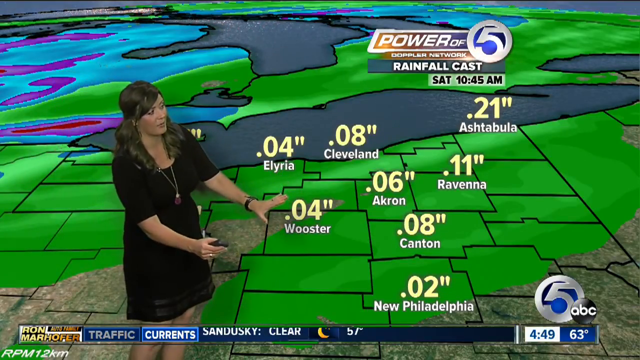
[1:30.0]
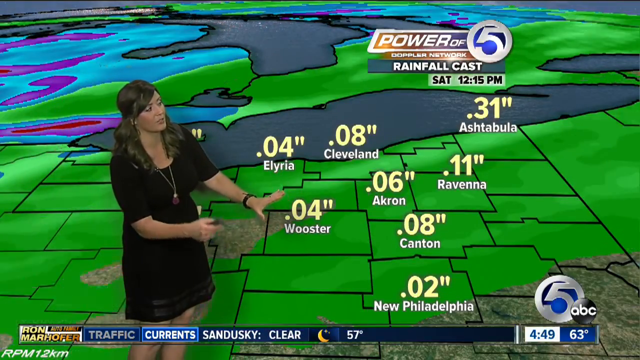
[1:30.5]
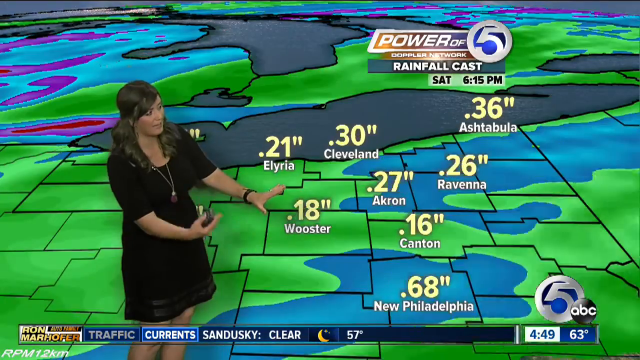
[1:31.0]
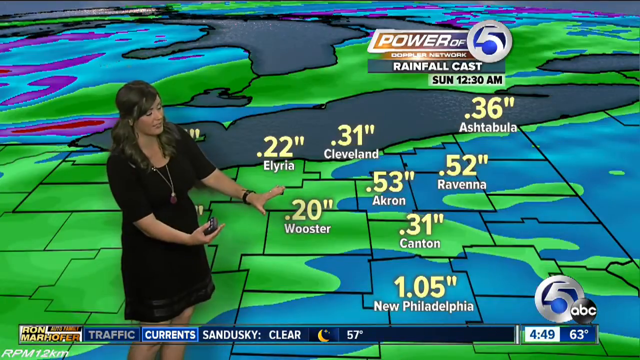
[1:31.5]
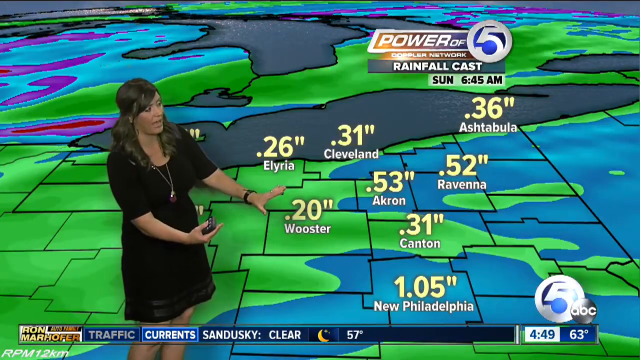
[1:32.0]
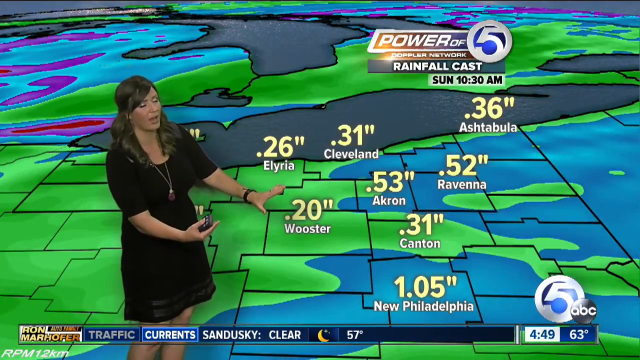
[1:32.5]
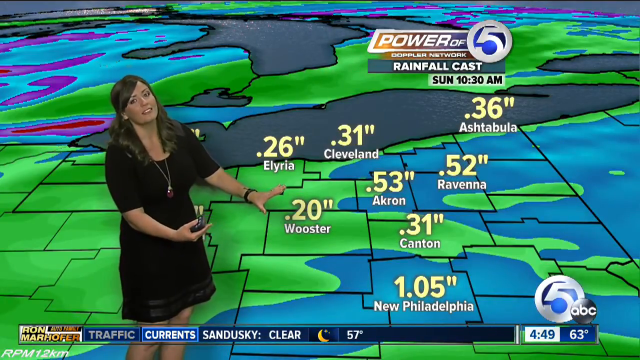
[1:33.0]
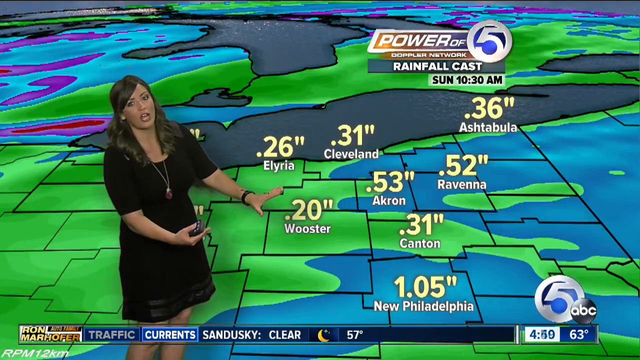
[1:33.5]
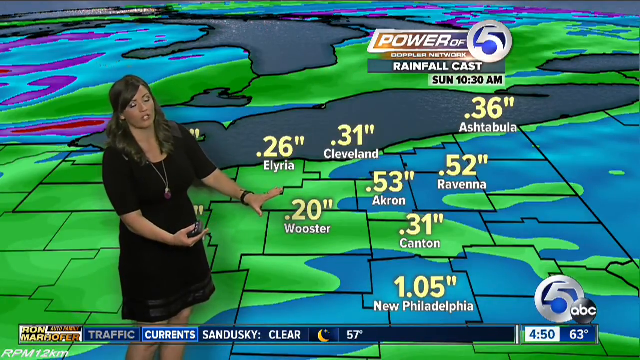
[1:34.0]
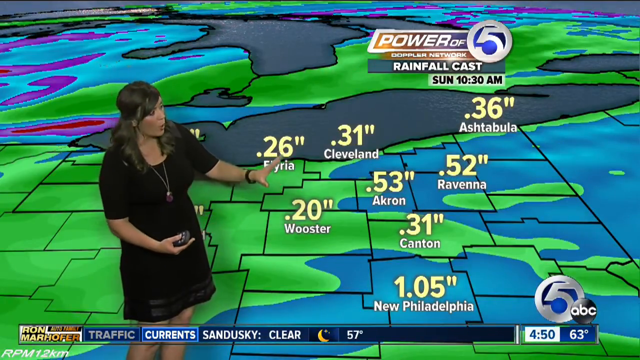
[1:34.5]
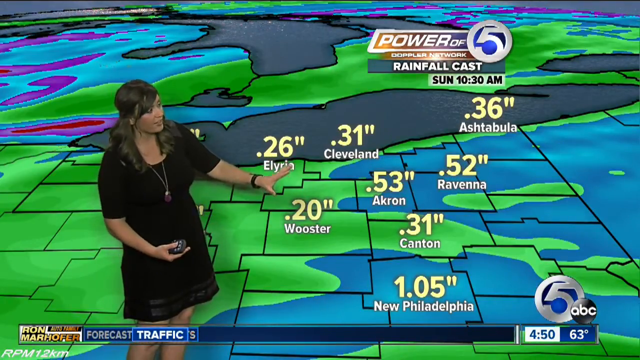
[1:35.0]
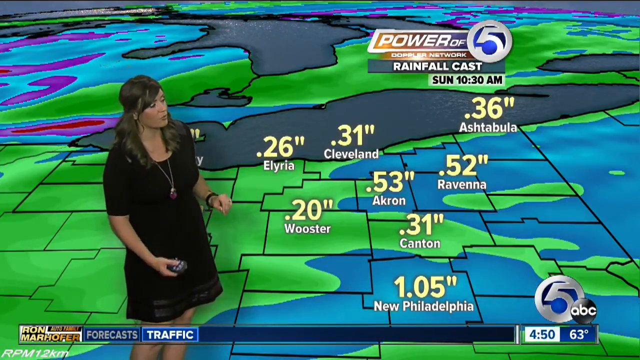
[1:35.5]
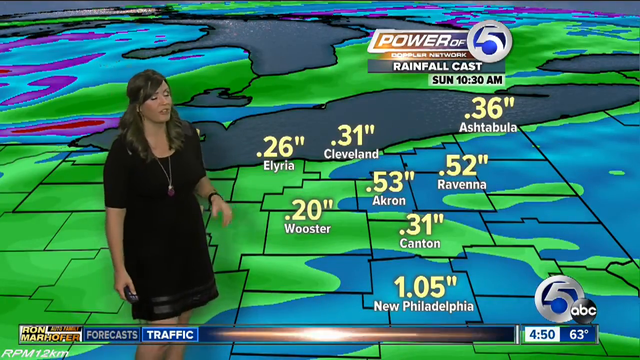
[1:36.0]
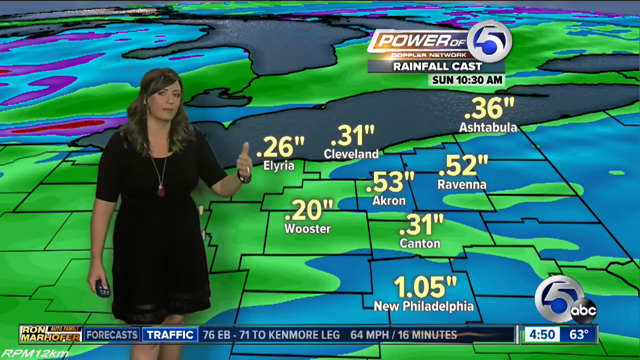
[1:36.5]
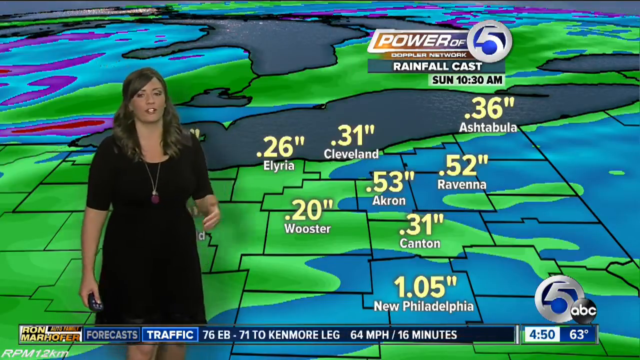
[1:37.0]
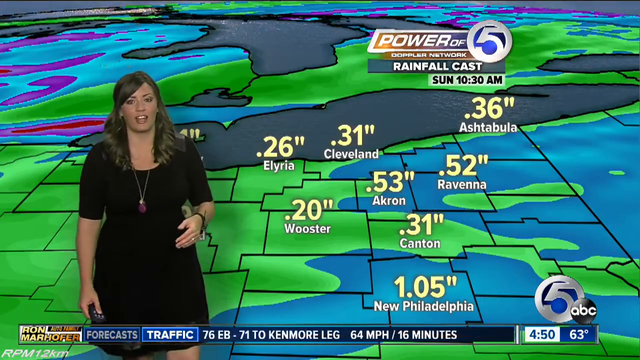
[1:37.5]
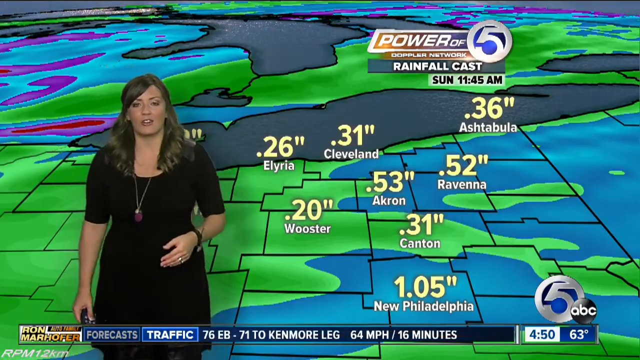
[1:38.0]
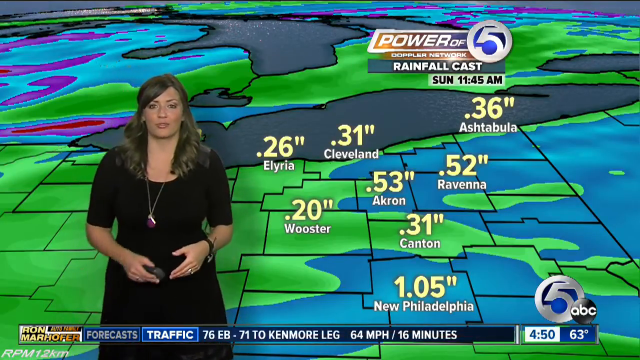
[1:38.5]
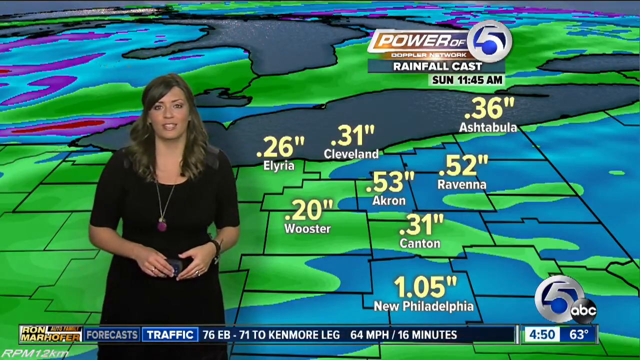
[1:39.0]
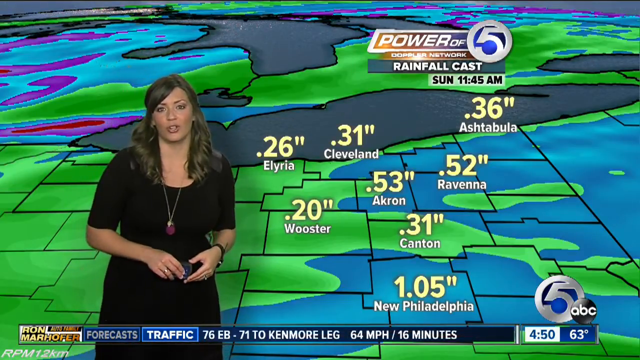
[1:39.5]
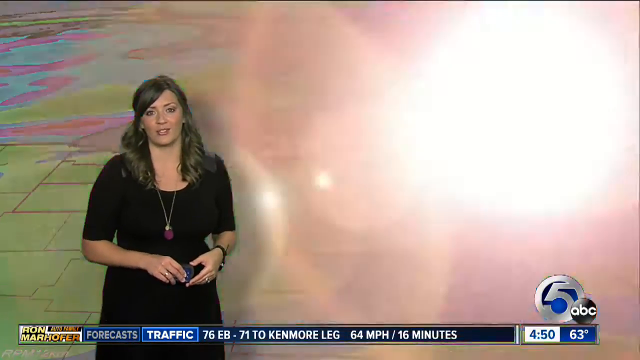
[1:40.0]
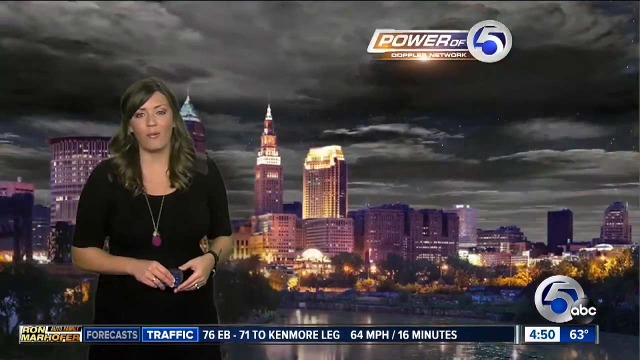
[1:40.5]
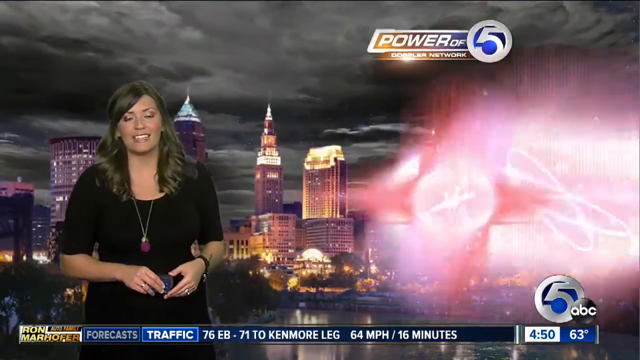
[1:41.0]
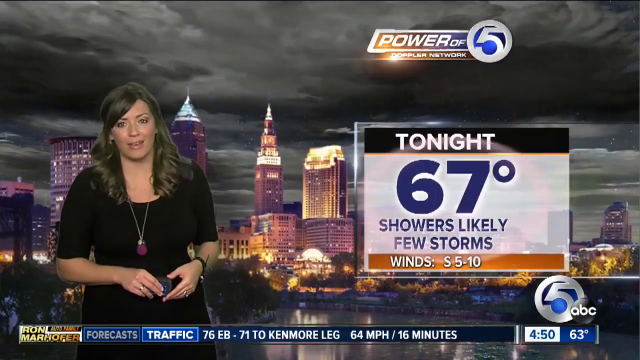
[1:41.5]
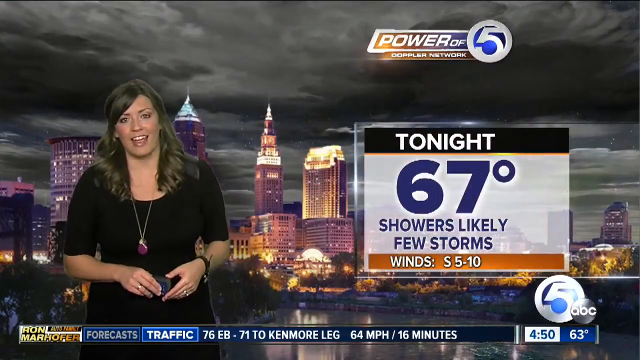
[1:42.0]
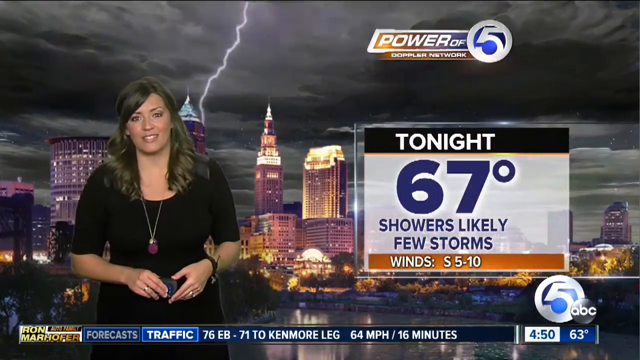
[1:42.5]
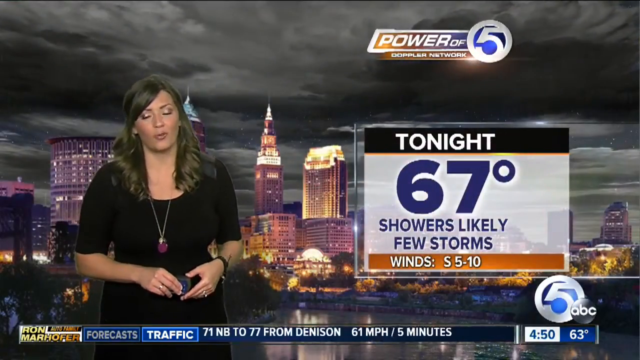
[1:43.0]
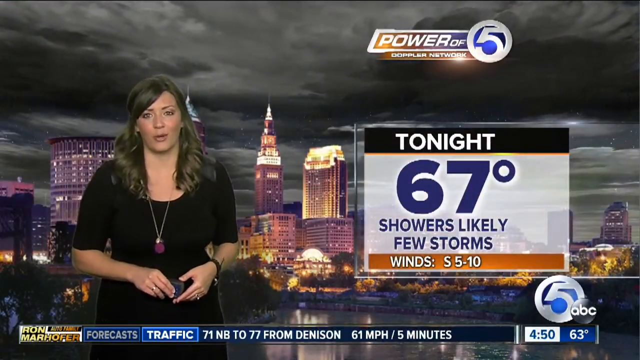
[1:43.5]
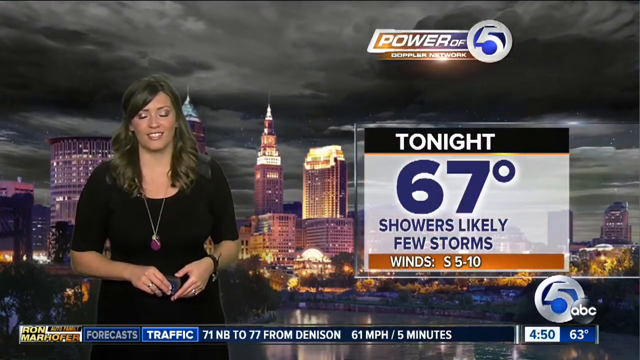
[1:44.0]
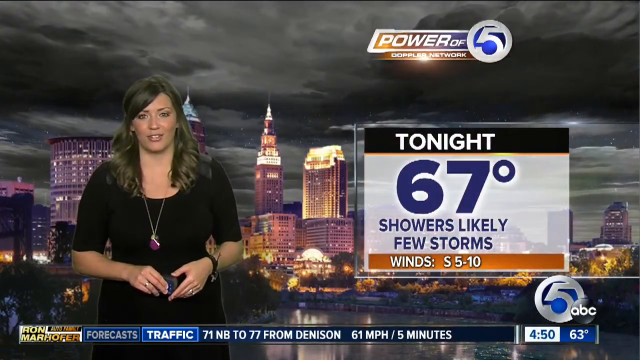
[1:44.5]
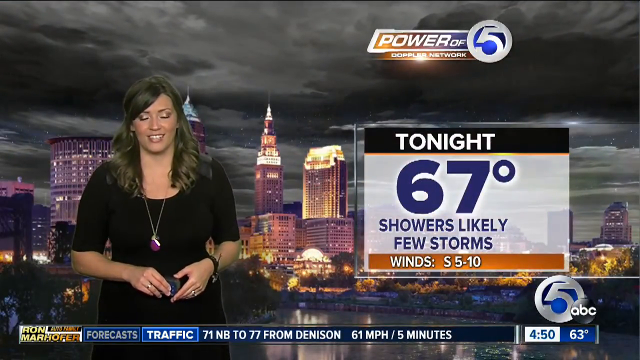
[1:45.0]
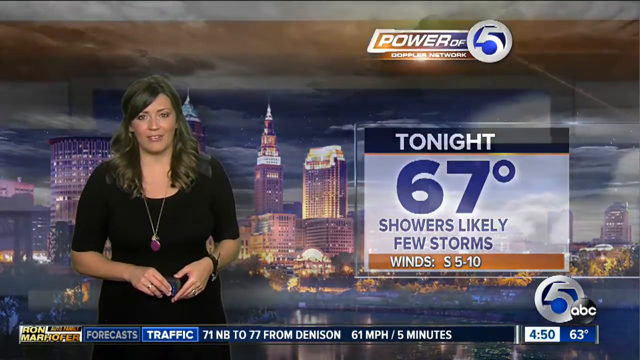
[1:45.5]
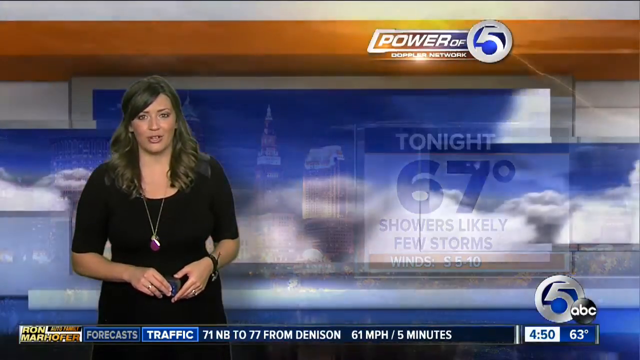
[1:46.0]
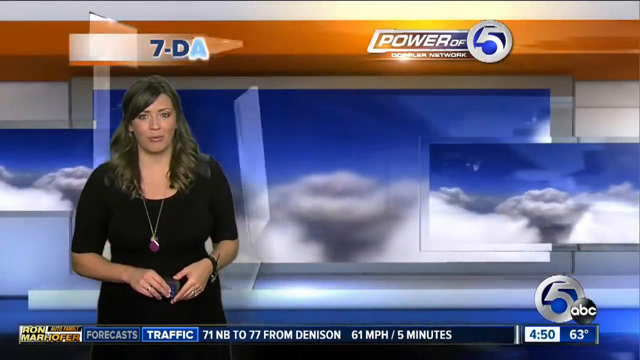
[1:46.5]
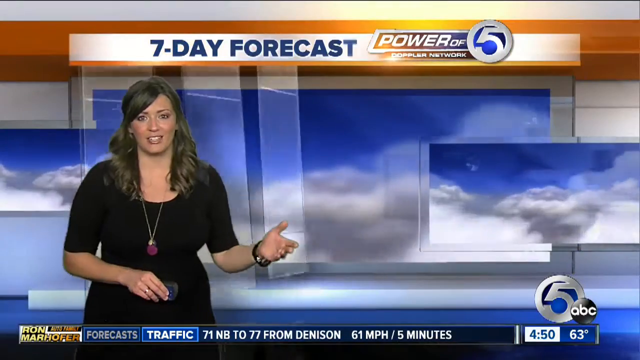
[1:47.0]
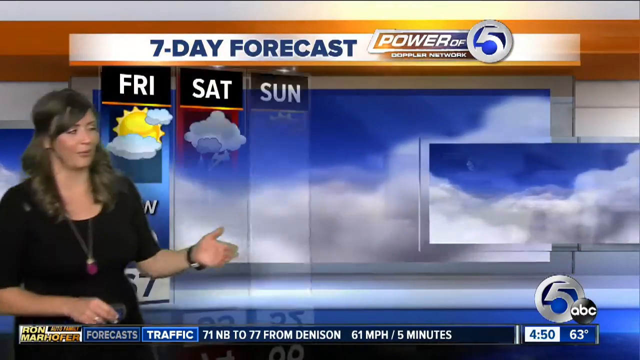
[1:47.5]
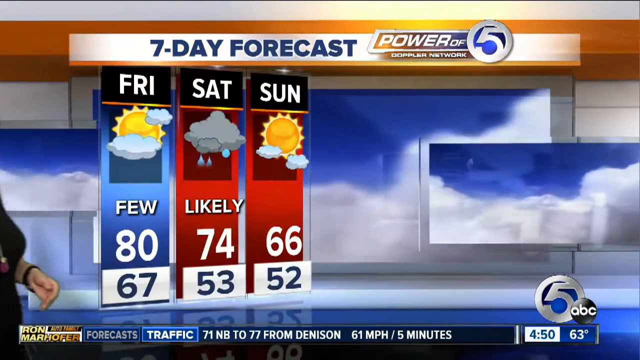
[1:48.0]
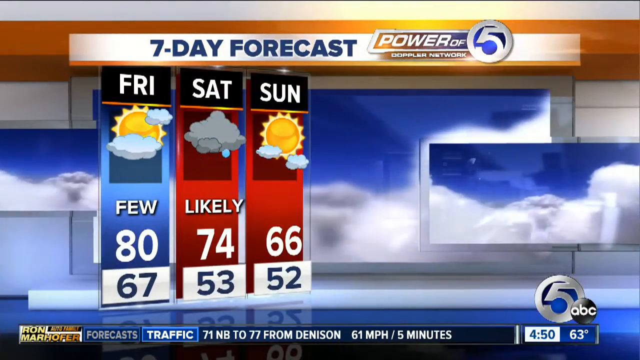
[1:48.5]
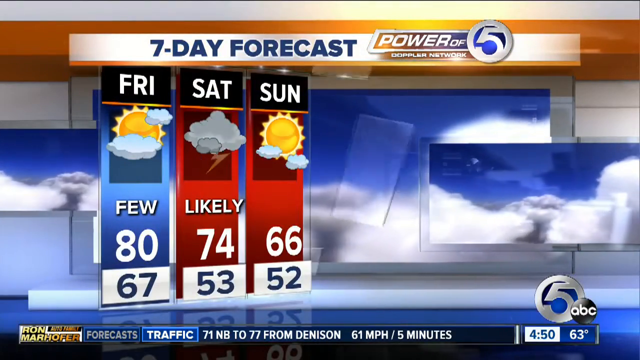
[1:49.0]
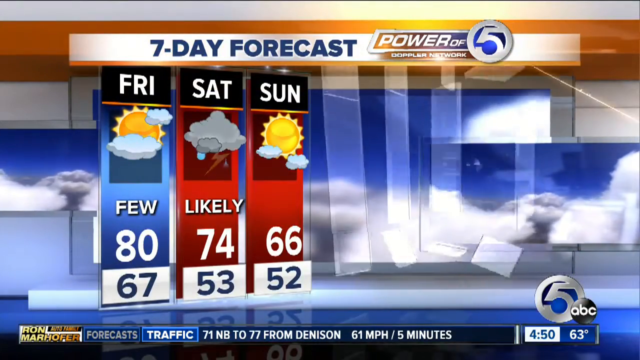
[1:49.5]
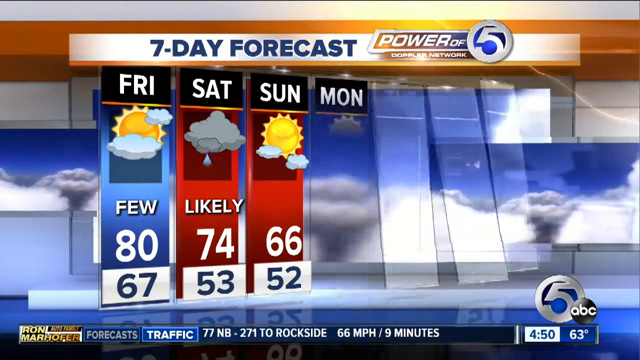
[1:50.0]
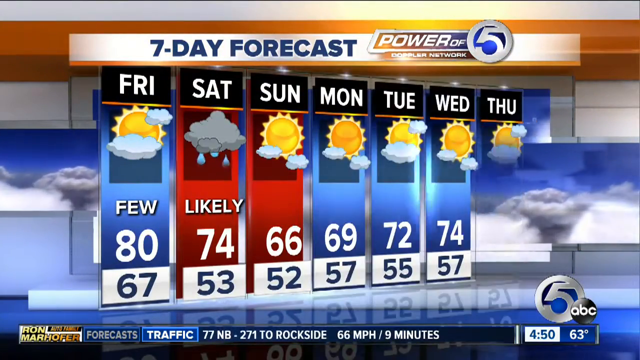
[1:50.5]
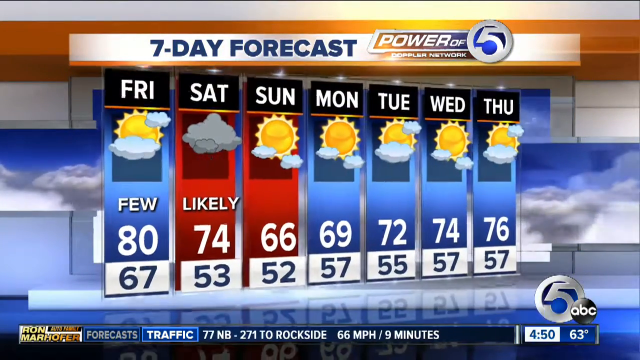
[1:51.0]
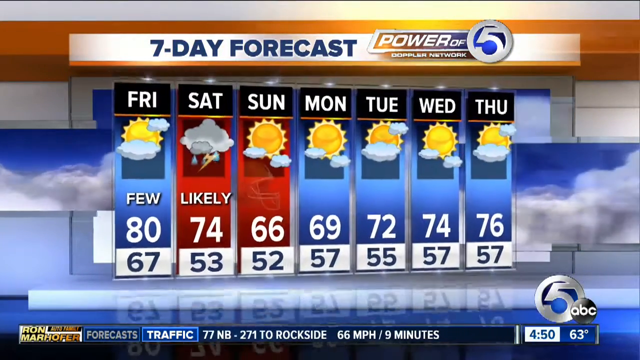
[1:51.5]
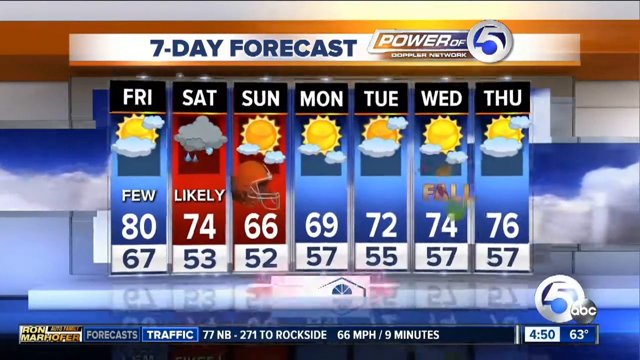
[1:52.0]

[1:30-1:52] Tracy, the weather presenter, has both hands out and points to 0.04 inches of rain. She wears a medium-length, solid black dress with short sleeves and a see-through section about four inches up from the bottom hem, along with a fairly long chain with a large red or purple medallion. Her medium brown hair comes down right to the neck cutout of her dress and turns out toward each shoulder. She talks about rain in the area. At the top it says "power of five Doppler radar" and at the bottom "channel 5 abc". She looks pretty happy.